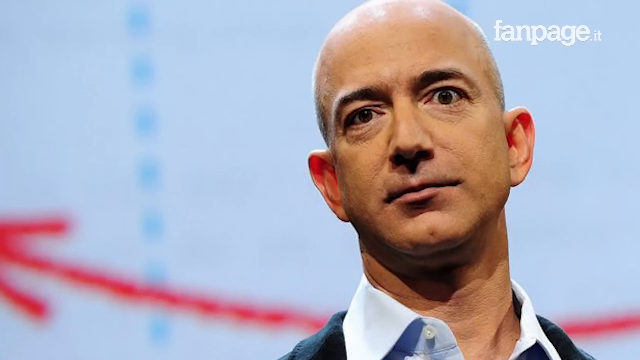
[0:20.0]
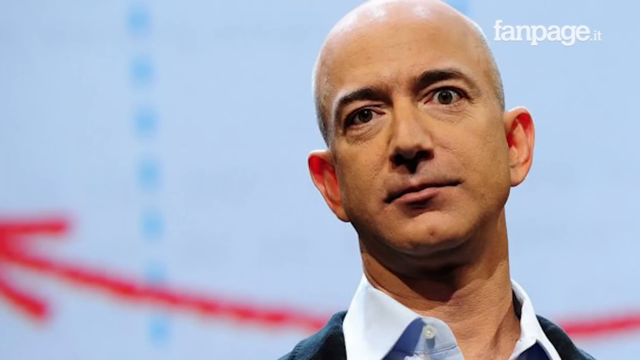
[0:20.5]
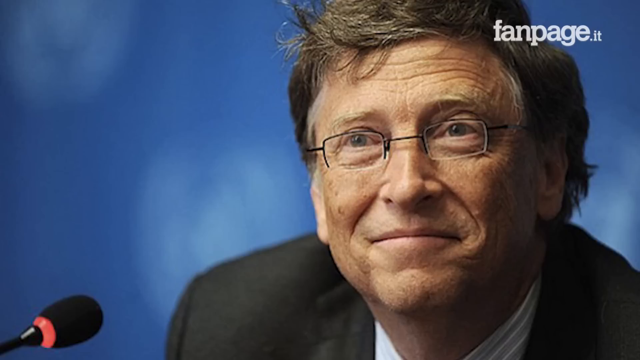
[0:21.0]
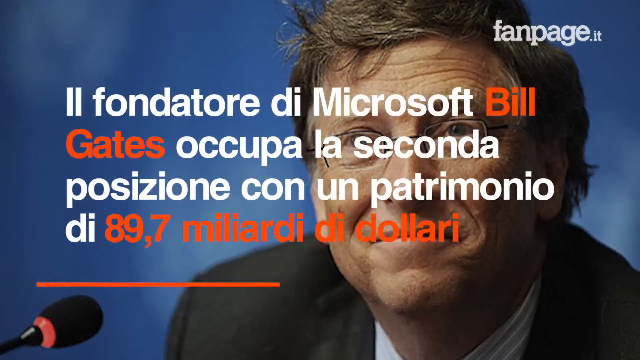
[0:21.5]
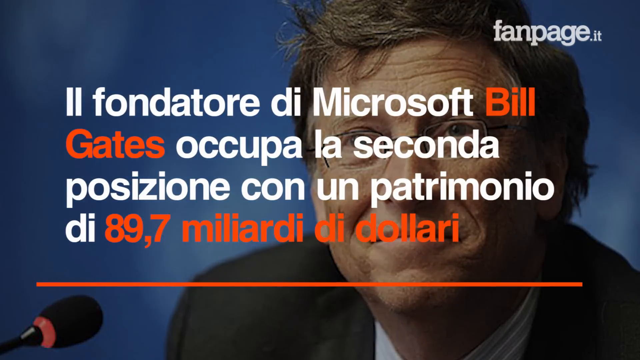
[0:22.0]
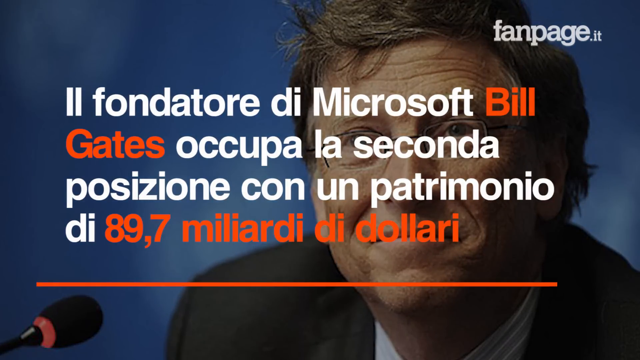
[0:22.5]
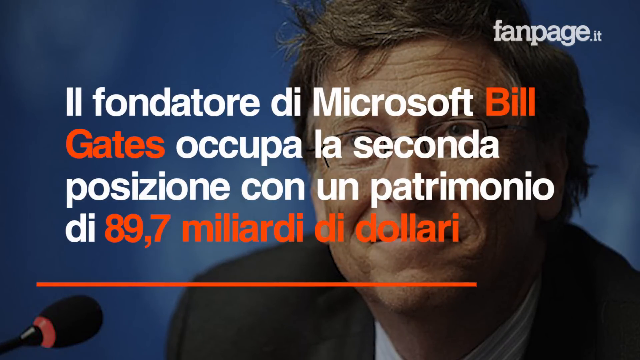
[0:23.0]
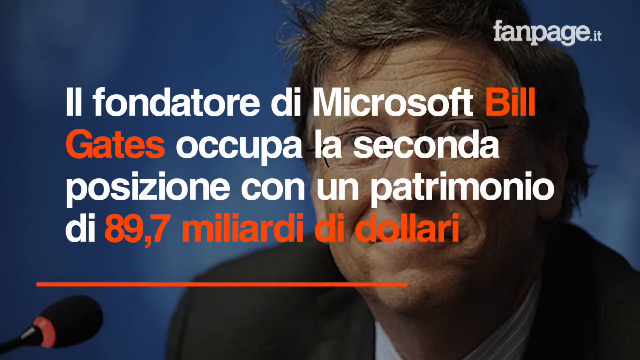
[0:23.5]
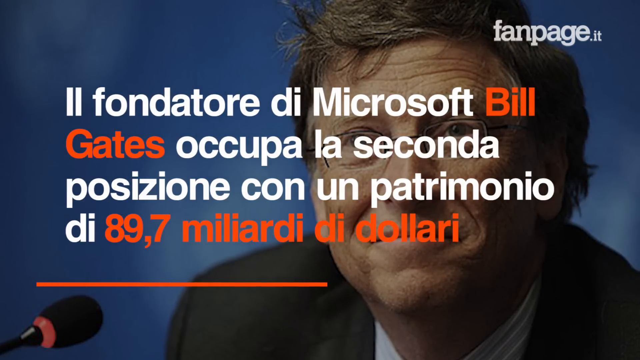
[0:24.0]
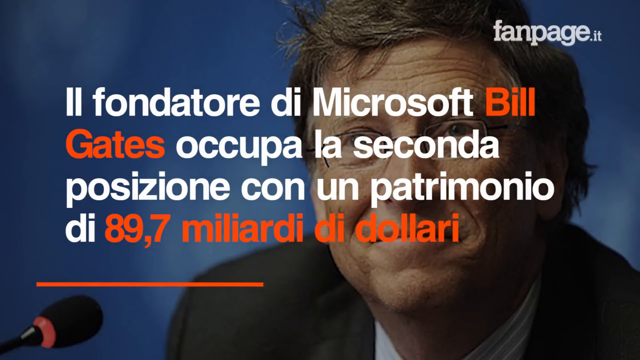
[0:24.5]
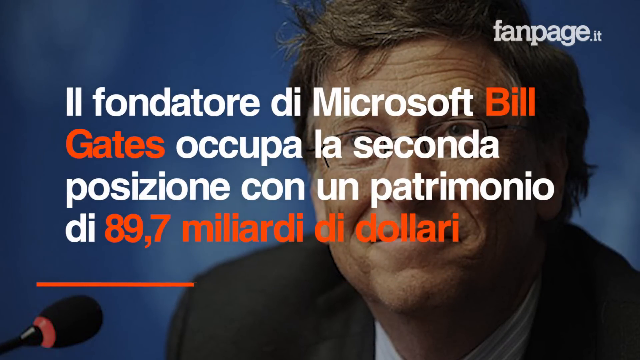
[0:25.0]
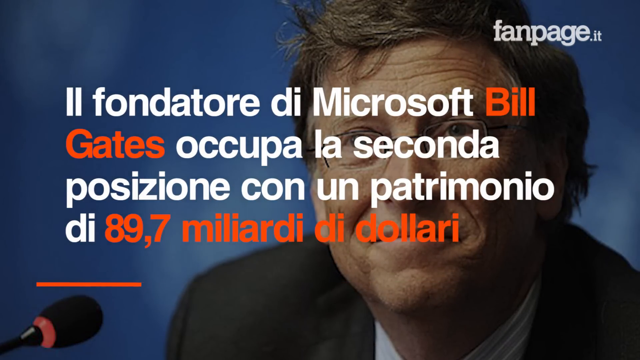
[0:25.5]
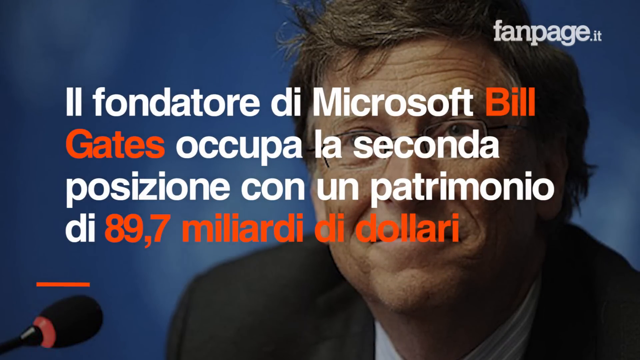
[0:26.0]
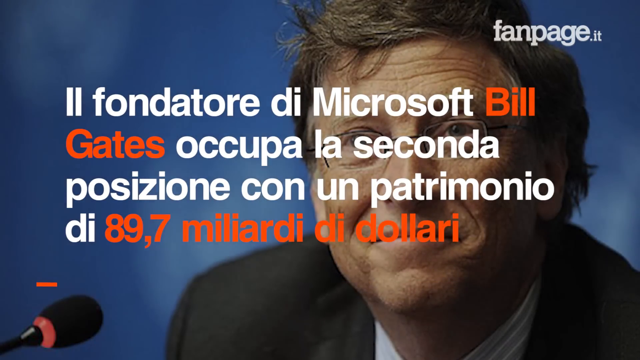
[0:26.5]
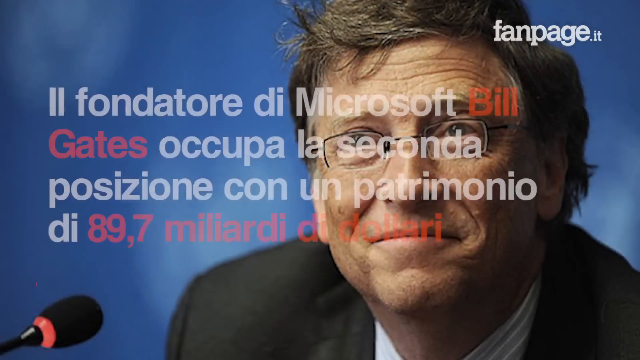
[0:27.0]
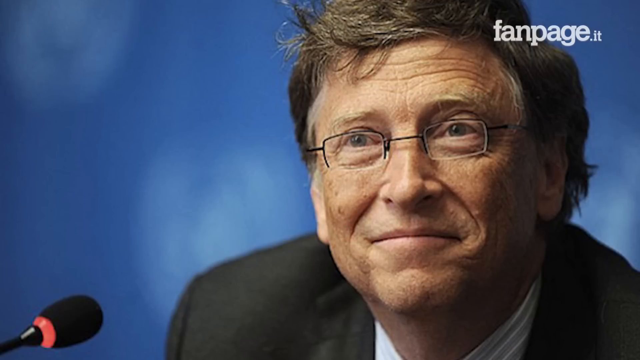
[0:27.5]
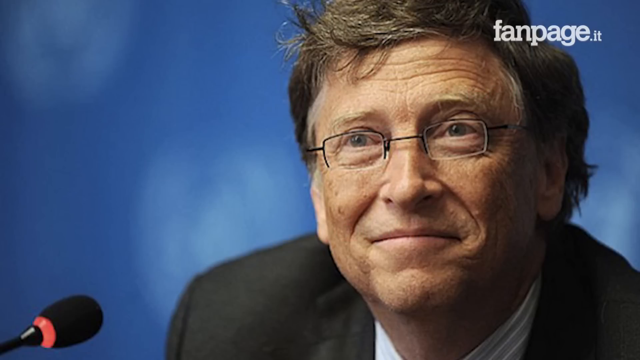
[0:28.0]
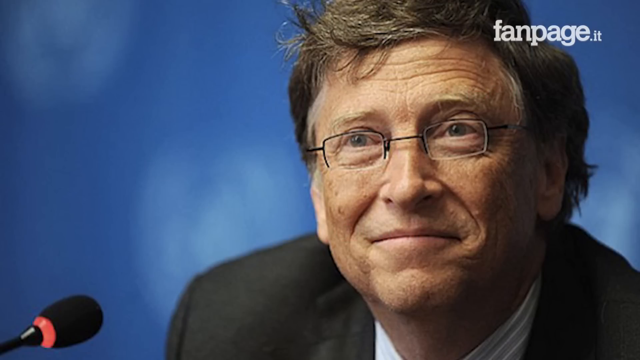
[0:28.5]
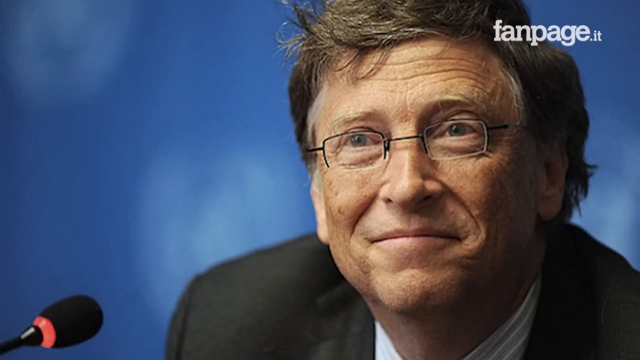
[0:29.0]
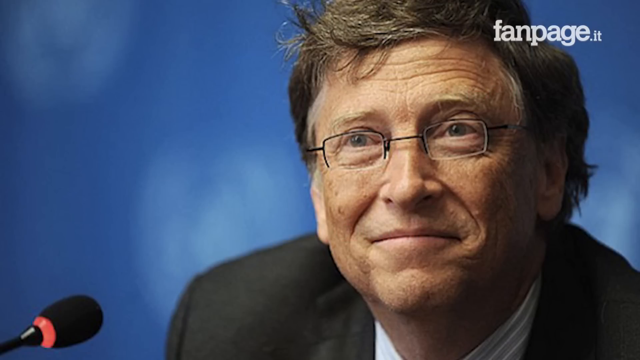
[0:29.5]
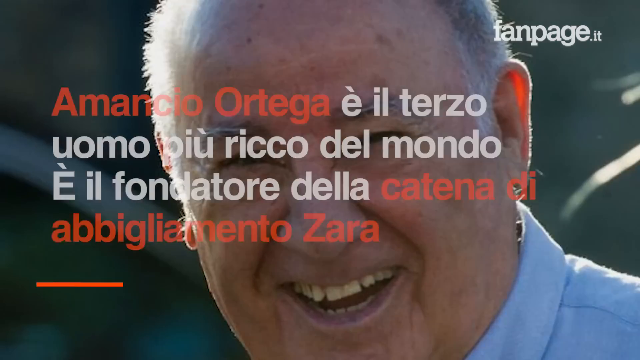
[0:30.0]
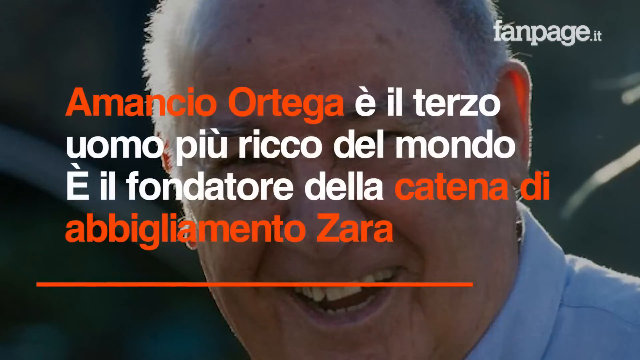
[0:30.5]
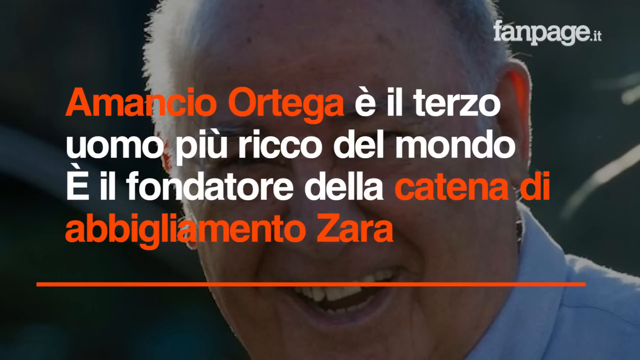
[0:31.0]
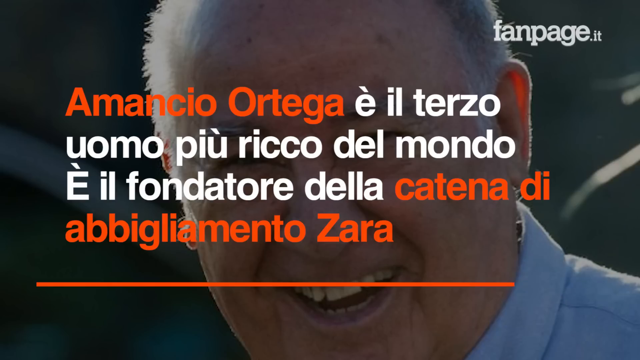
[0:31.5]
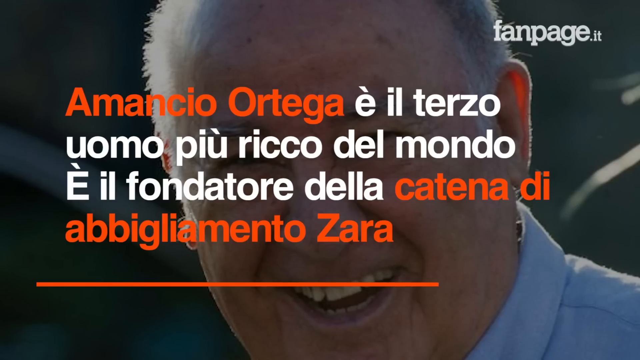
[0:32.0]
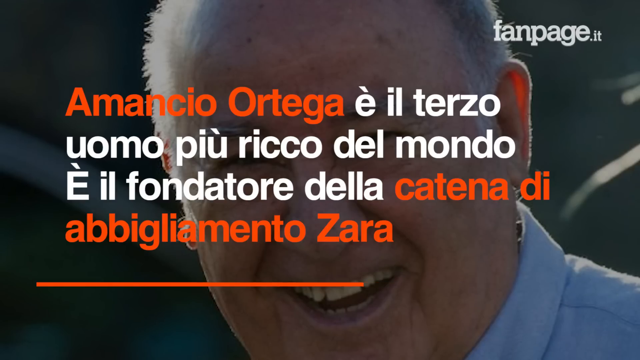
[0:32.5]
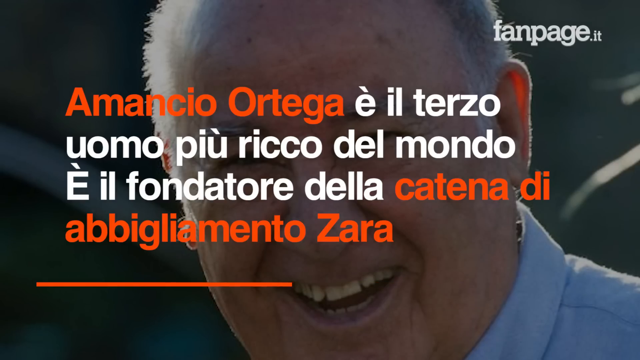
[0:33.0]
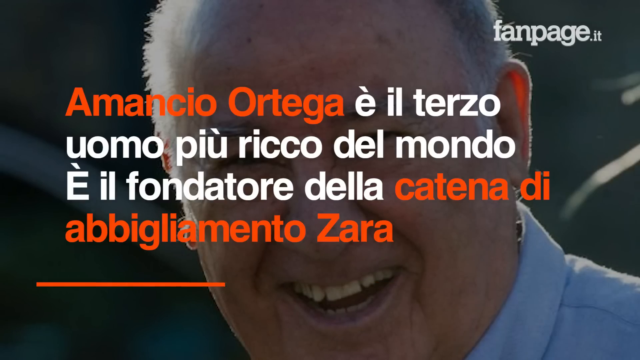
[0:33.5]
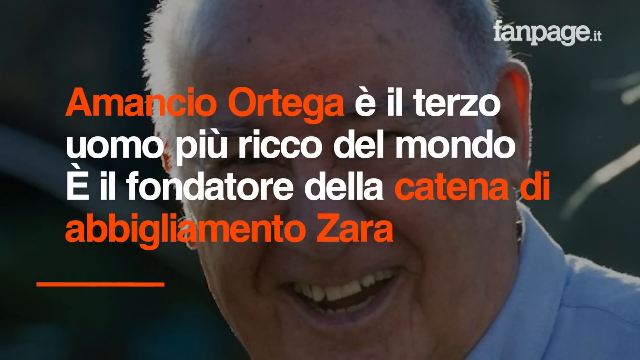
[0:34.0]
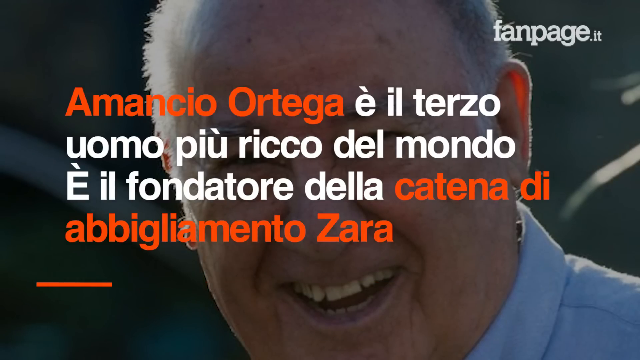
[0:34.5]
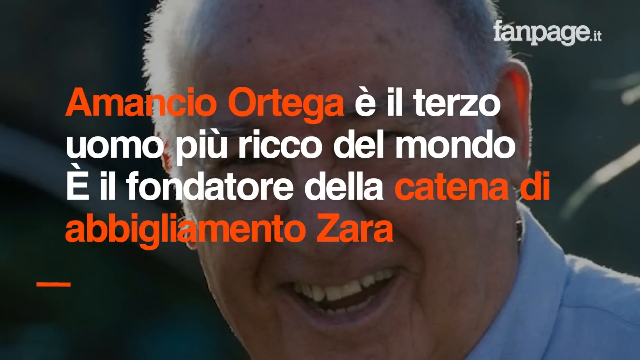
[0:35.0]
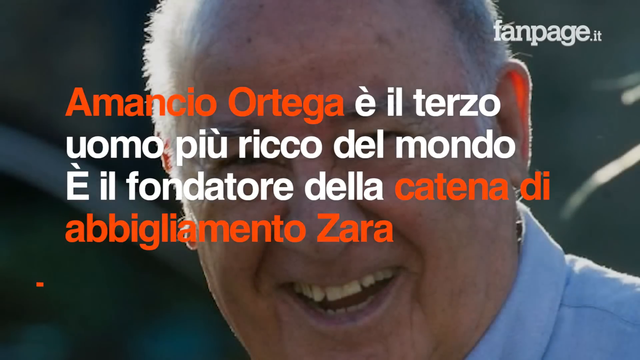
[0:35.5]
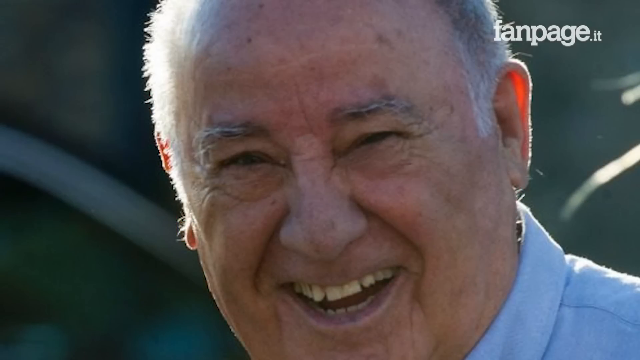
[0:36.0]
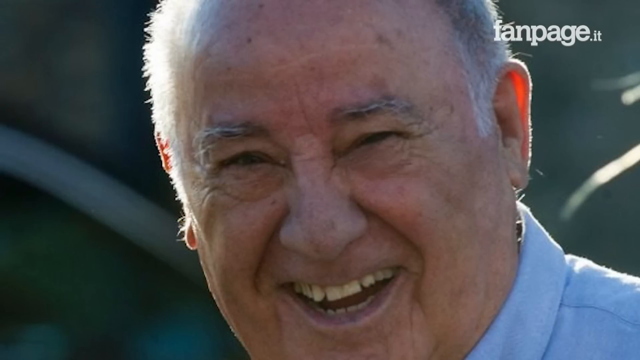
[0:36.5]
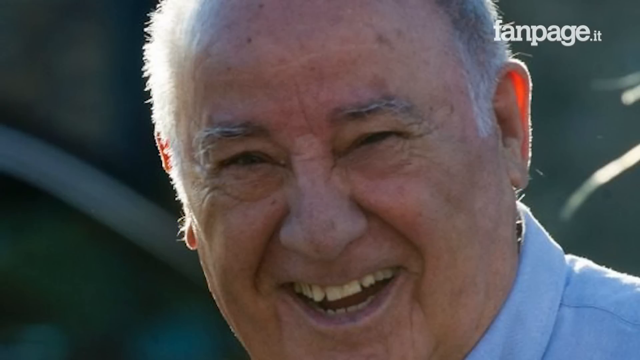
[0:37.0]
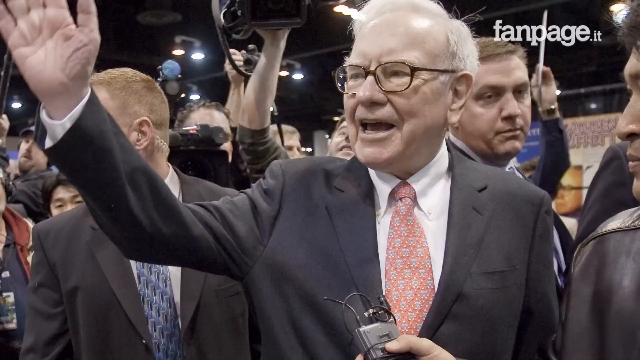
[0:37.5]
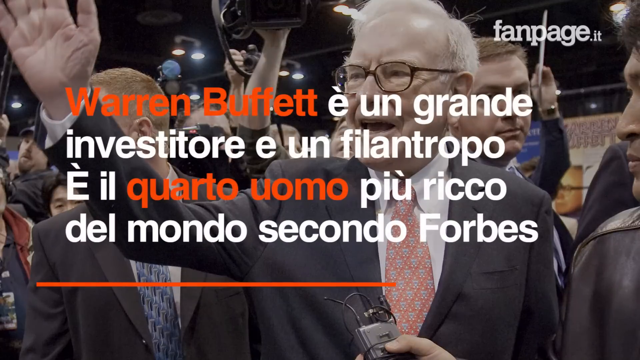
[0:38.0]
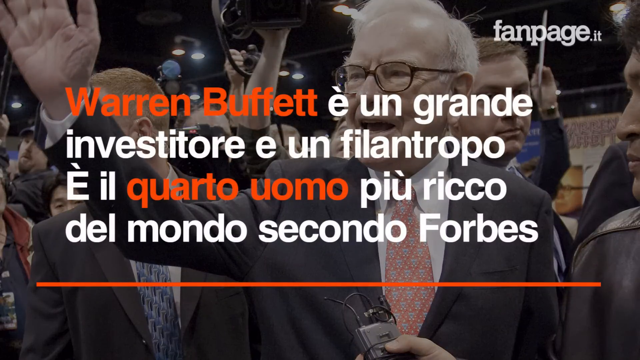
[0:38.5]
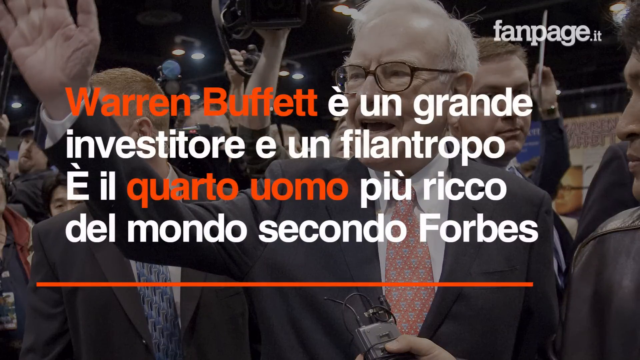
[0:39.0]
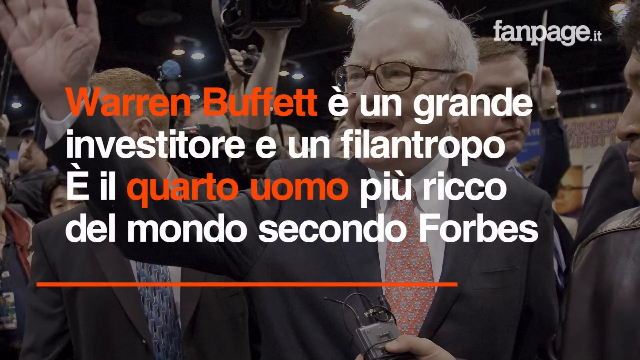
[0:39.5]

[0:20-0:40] The video cuts to an image of Bill Gates against a dark blue background, with the text still in the top right. His hair looks somewhat messy, and he is visible from the chin up to a little of his hair. There are wrinkles across his forehead as his eyebrows are raised, and he wears small, dark-rimmed glasses. He has what looks like a slight smile, with laugh lines crinkled up at the sides of his eyes. A little of the top of his black coat is visible. Foreign-language text runs across in white, except "Bill Gates" and the money portion, which are in orange. An orange bar goes across from right toward left; a pulse moves from the middle to the right and then back to the left, and once it reaches the left, it goes off the screen. The video then cuts to another, unidentified man with sunspots on his head, balding on top with a little gray hair on the sides. His mouth is open, showing his top row of teeth and a little of the bottom row, and his head is tilted slightly to the left; he is visible from just above the chin up. The text reads "Amancio Ortega" in orange, with the rest in white except the last four words. An orange bar runs underneath, and once it reaches the left side, the text disappears. The background behind him is green, and he appears to be outside. Next is a man with gray hair and black glasses, wearing a suit, his left hand extended up toward the left corner with the palm and fingers pointing up to the top, with people all around him. Big, bold orange letters read "Warren Buffett".